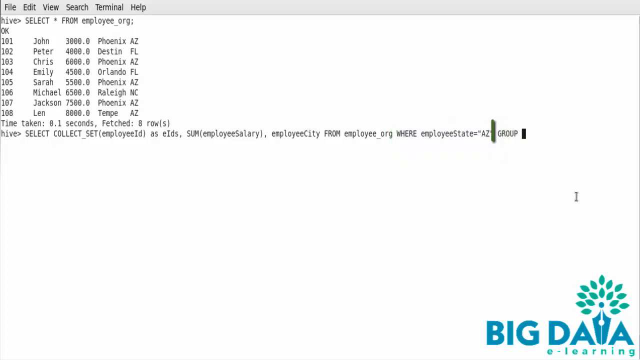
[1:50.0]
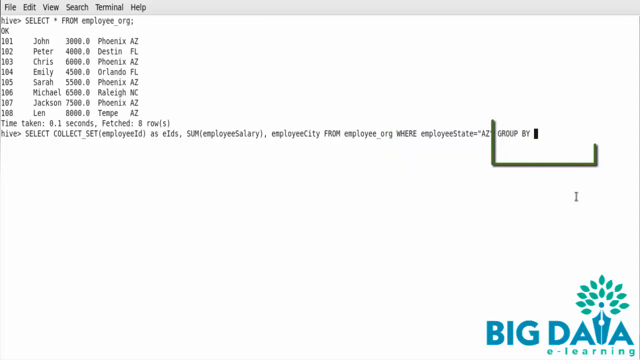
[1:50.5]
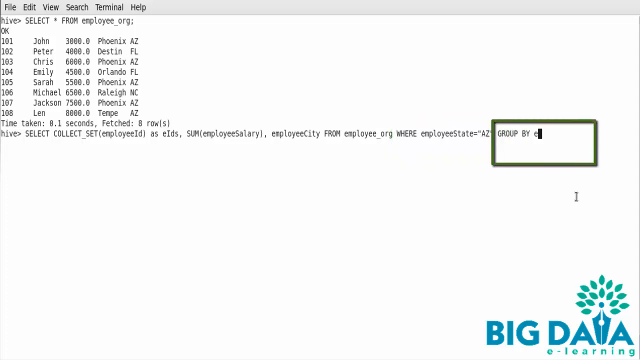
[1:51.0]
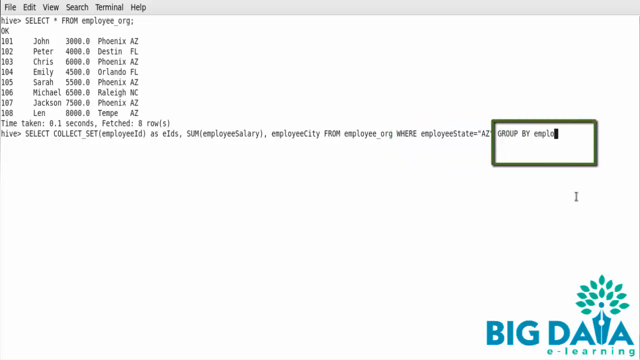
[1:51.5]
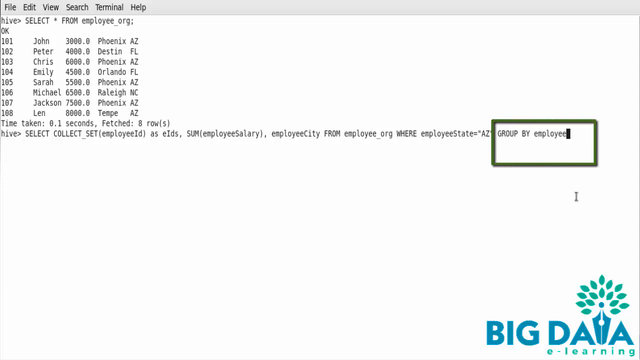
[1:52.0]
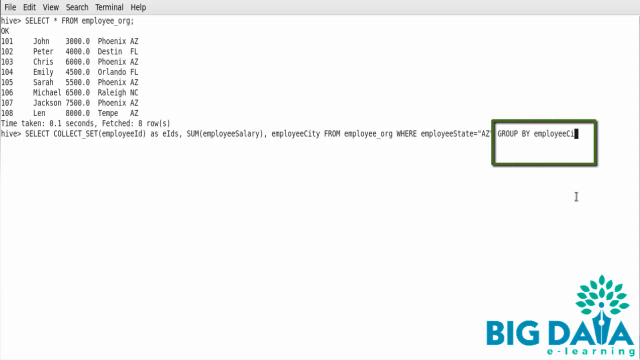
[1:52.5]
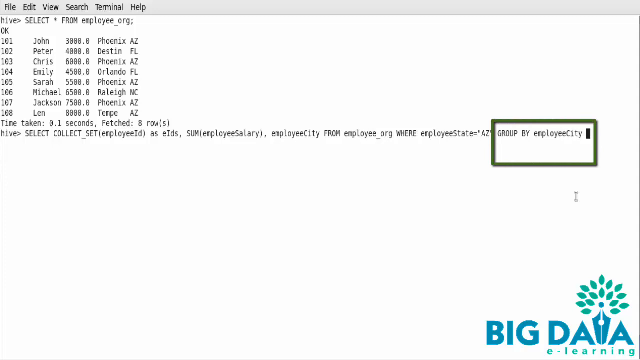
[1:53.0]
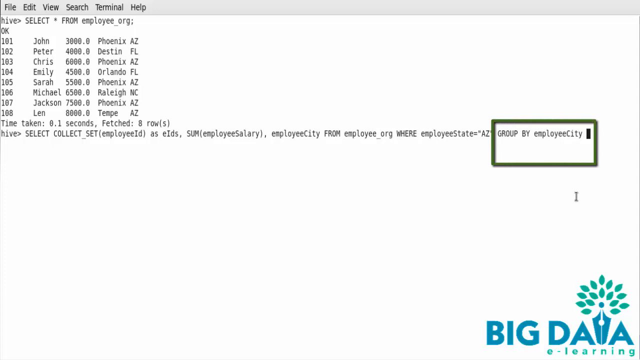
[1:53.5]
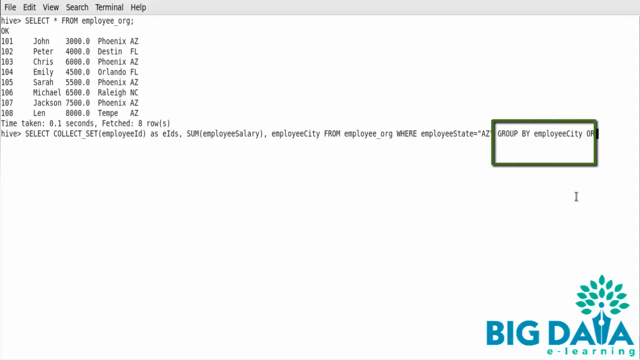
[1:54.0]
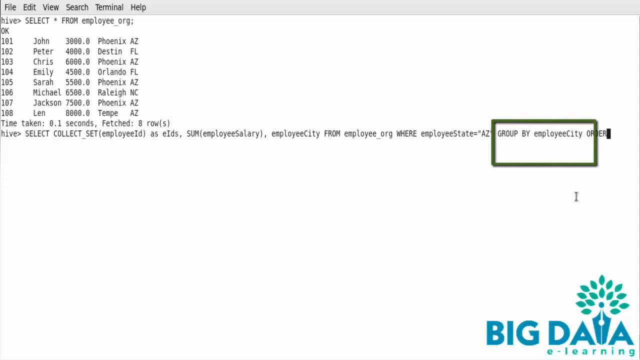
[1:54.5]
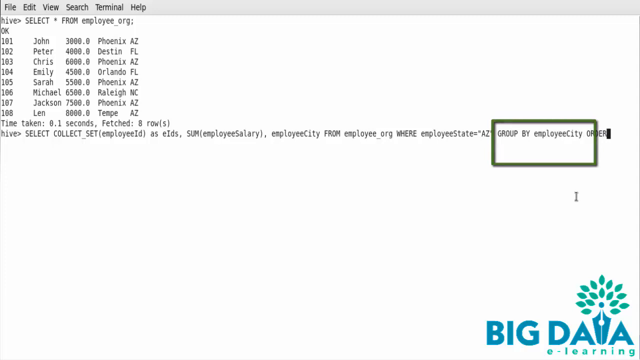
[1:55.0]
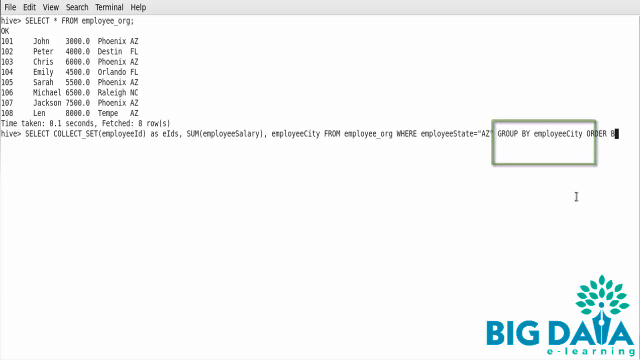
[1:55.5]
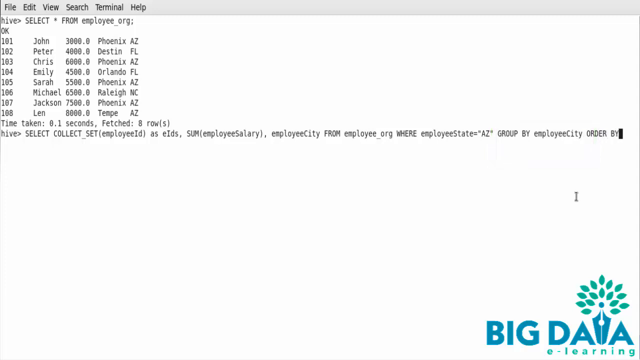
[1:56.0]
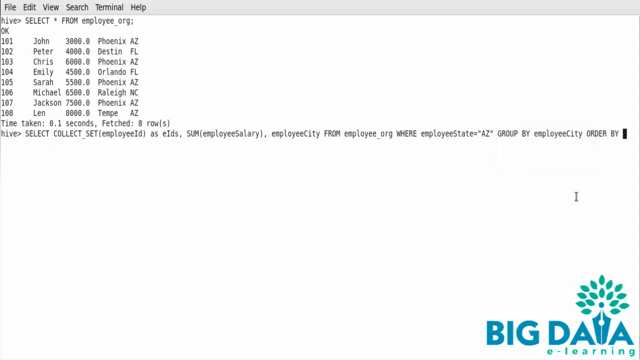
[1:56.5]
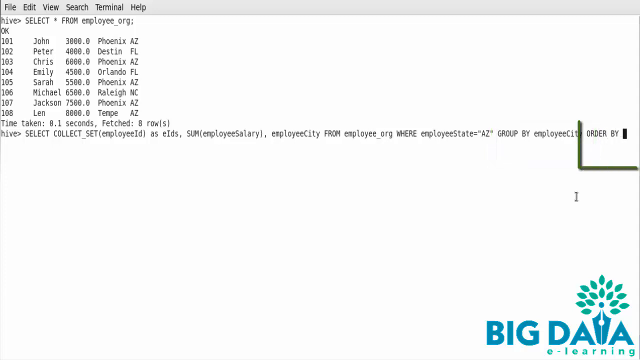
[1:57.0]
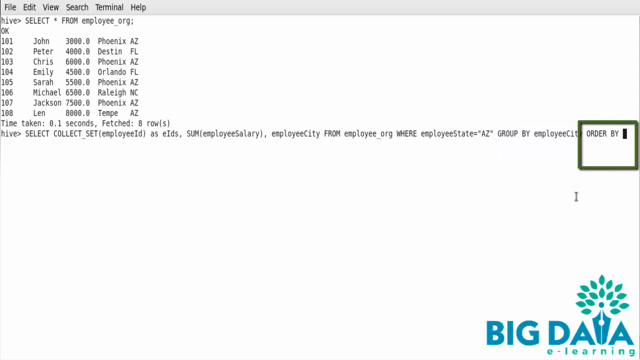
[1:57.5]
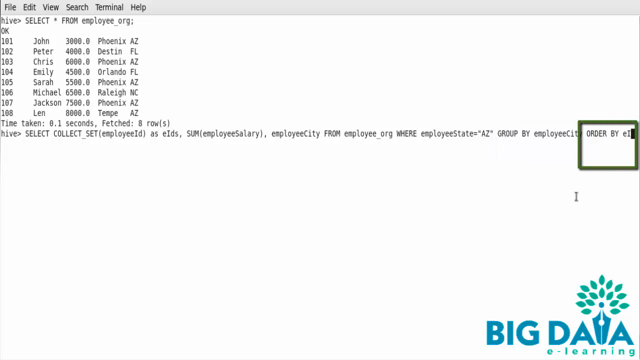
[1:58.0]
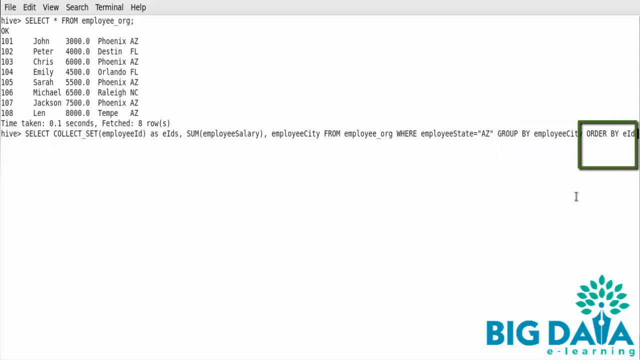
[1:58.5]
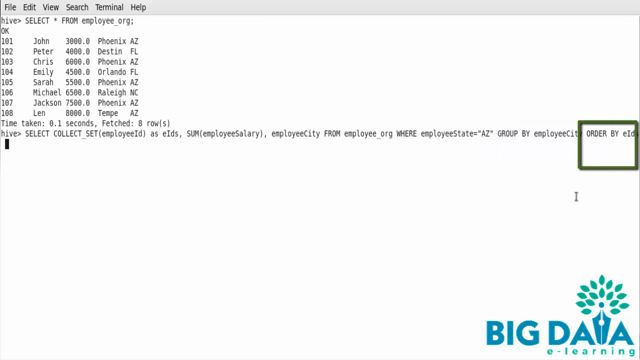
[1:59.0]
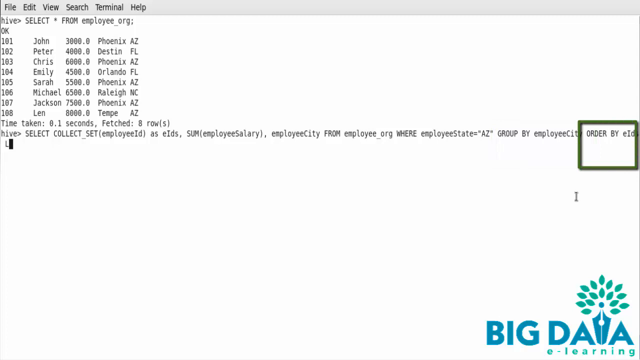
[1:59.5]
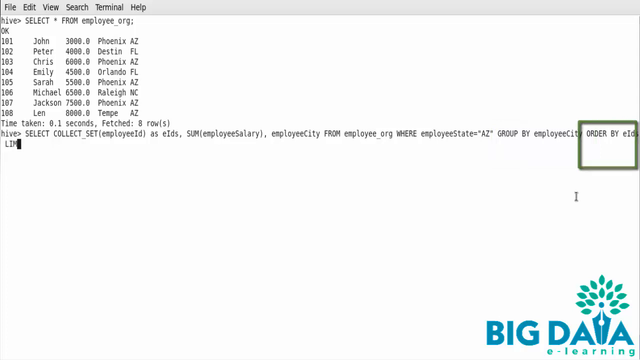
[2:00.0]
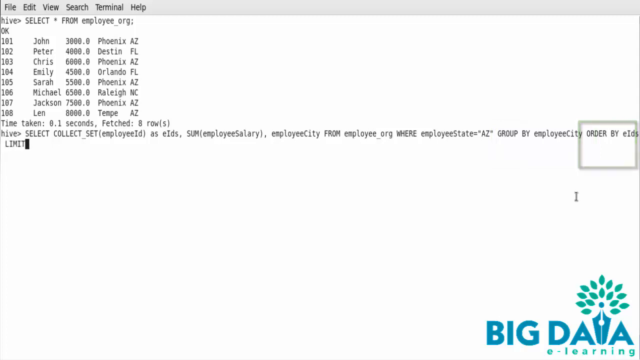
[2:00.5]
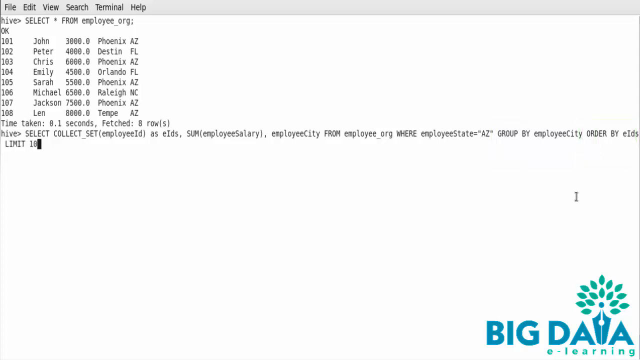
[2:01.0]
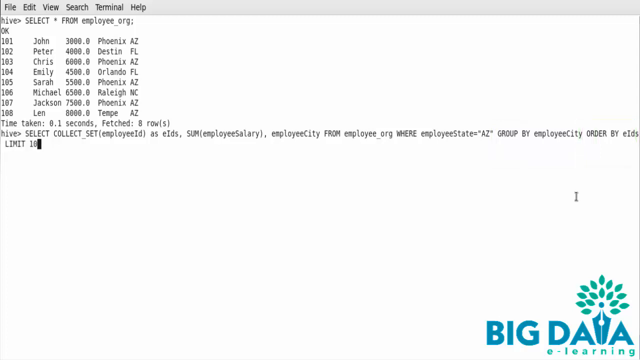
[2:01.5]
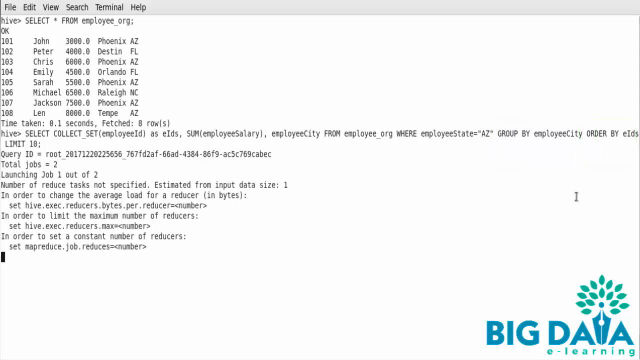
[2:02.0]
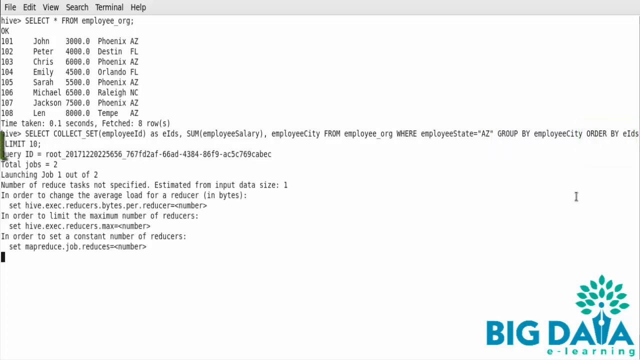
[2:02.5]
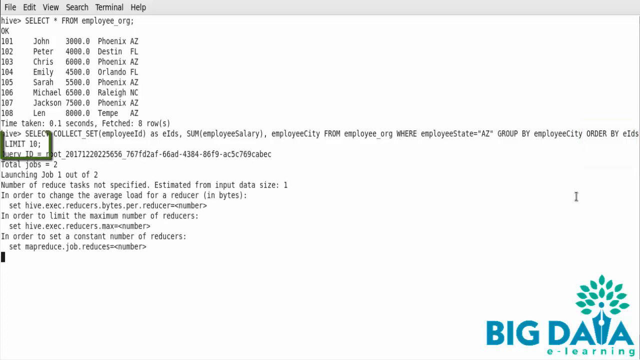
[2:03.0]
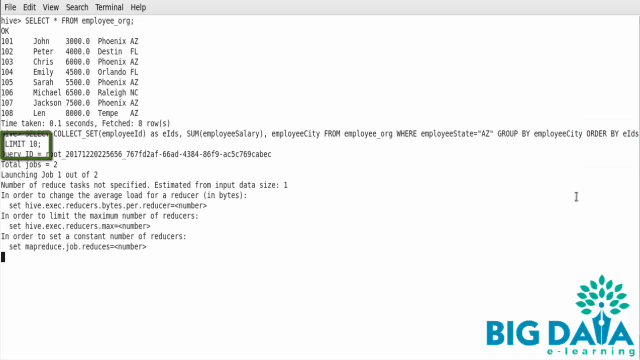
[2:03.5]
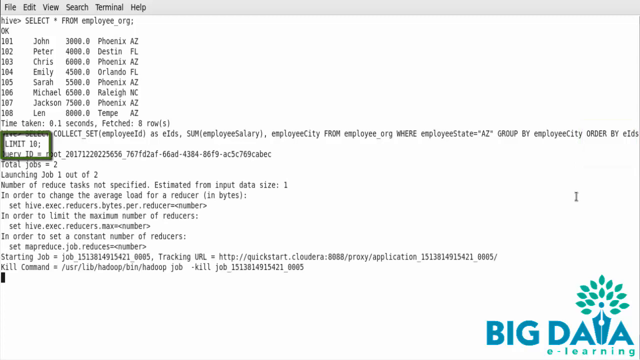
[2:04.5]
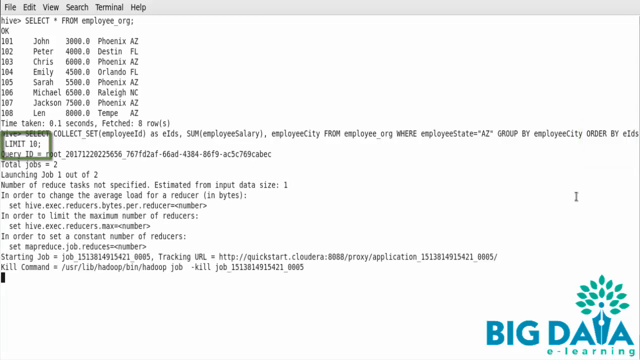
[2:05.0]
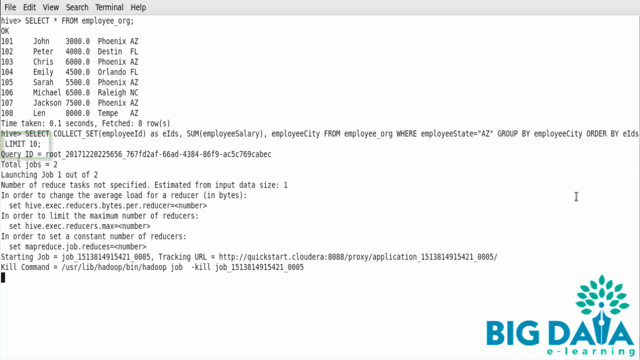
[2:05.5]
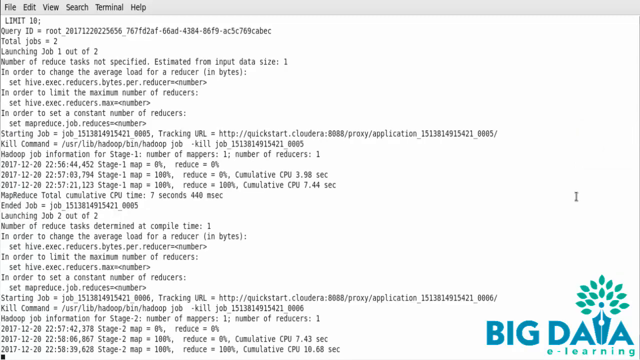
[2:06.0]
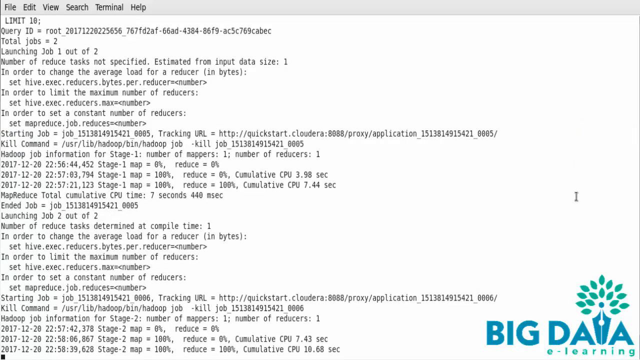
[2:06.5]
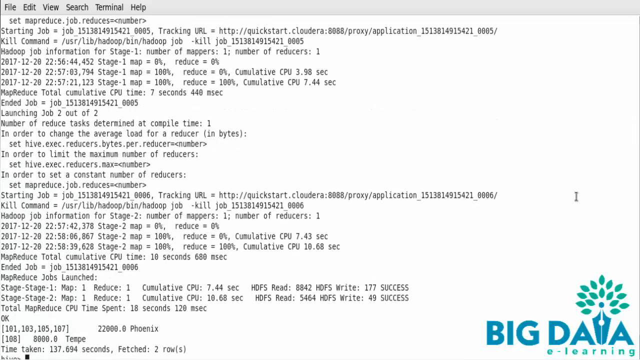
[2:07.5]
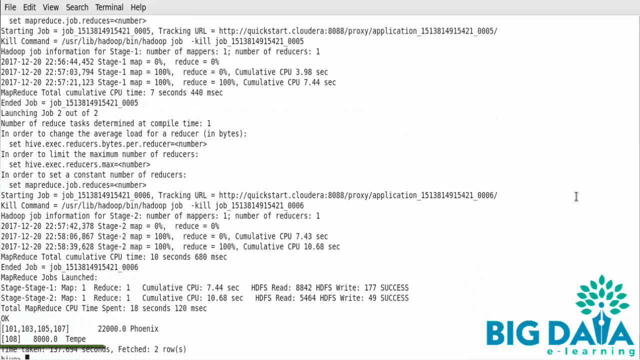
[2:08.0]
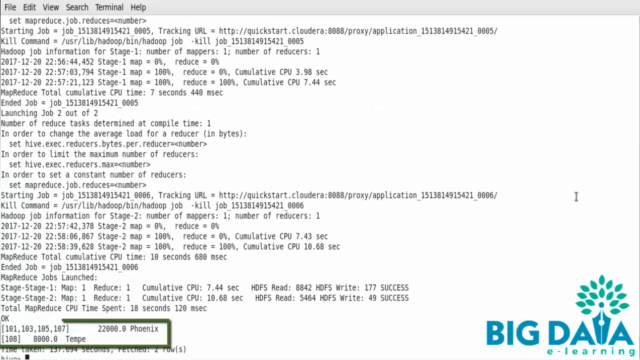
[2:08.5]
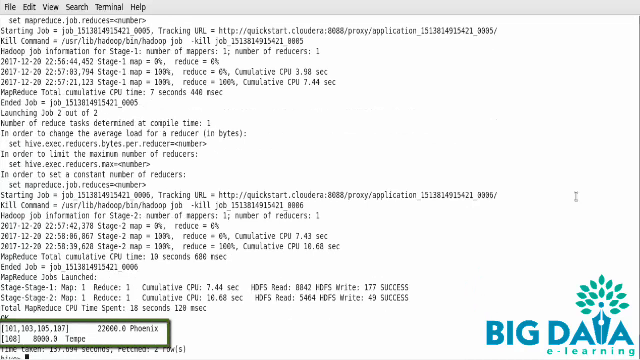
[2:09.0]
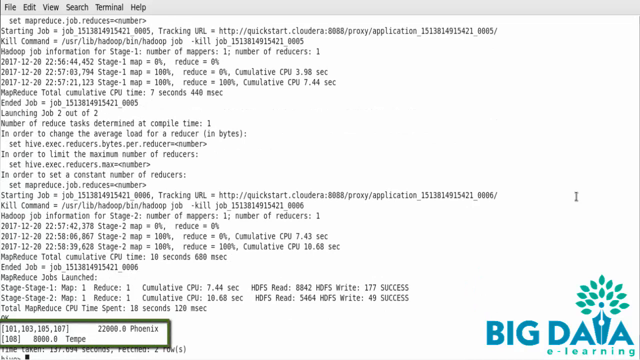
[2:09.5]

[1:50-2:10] A demonstration of how to query Hive tables on a computer continues. A table at the top of the screen lists names, with numbers ranging from 101 to 108 next to them and cities and states listed after each name; the numbers, names and locations are arranged in columns. Below this, script is being typed onto the screen in a large white text box. As the typing continues, different words are highlighted in a green box: first "group by employee city" is highlighted, then the box disappears and "order by" is highlighted, then that box disappears and "limit 10" is similarly highlighted. Many lines of script are added to the screen at once as the cursor moves down the page.